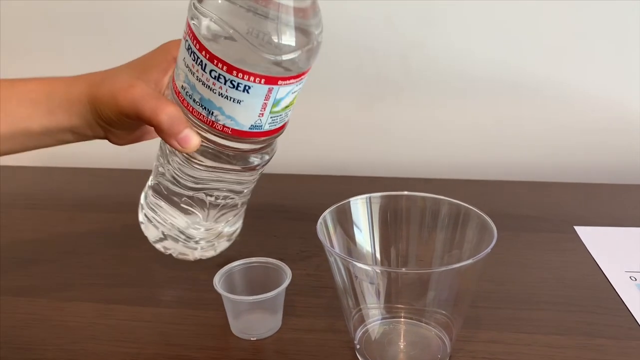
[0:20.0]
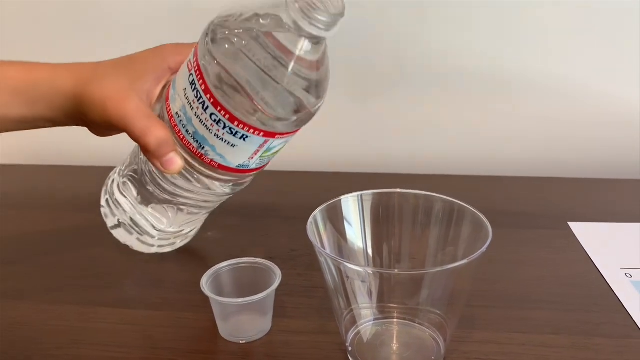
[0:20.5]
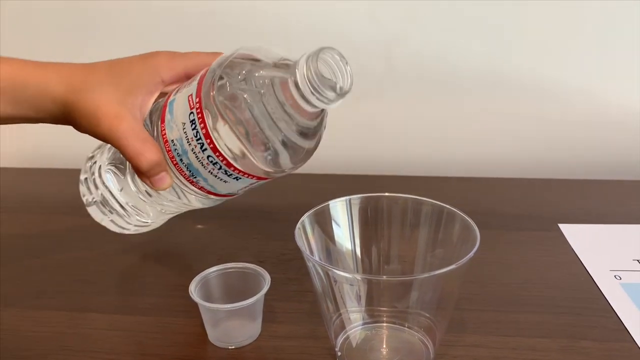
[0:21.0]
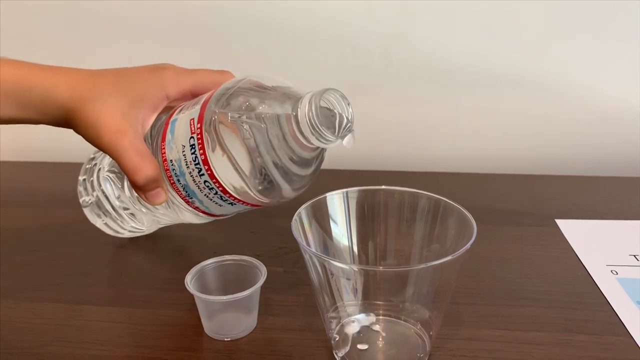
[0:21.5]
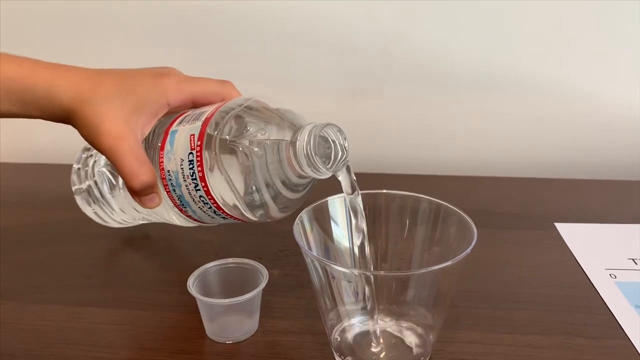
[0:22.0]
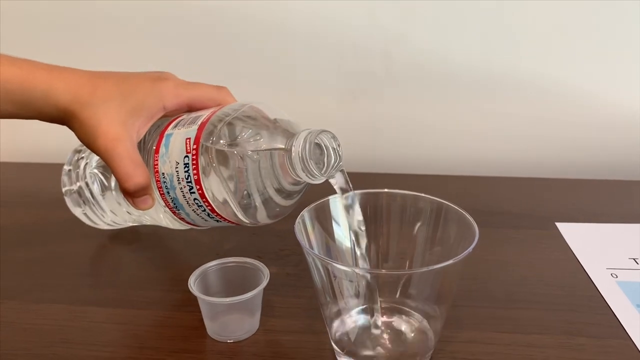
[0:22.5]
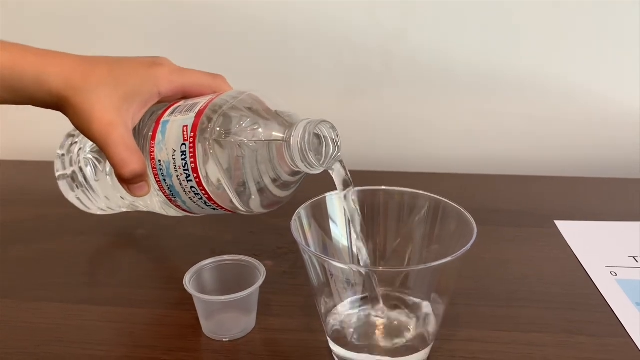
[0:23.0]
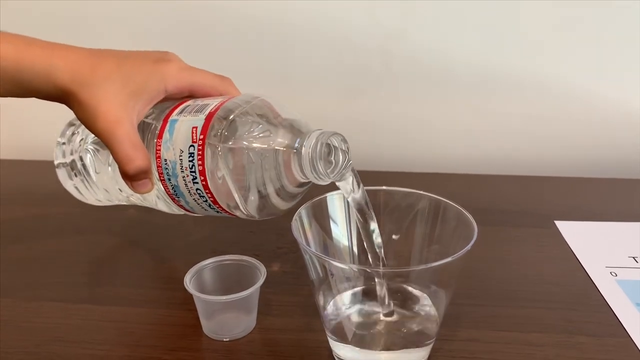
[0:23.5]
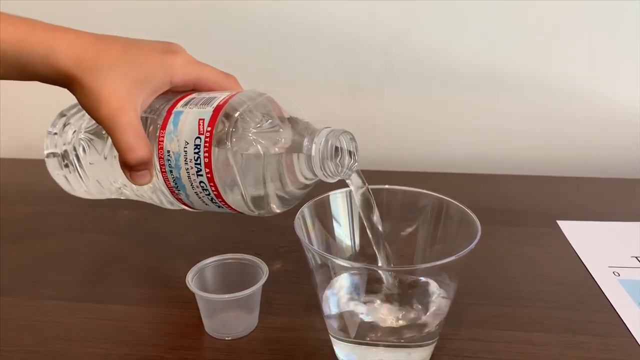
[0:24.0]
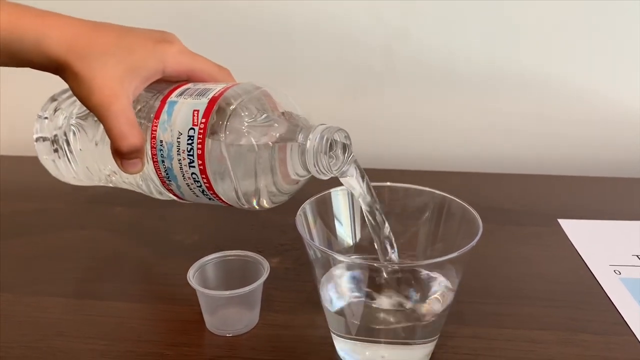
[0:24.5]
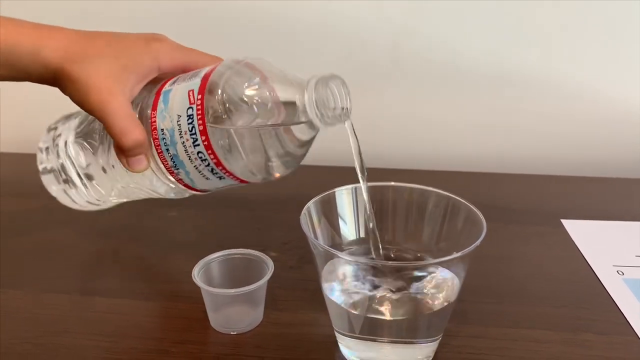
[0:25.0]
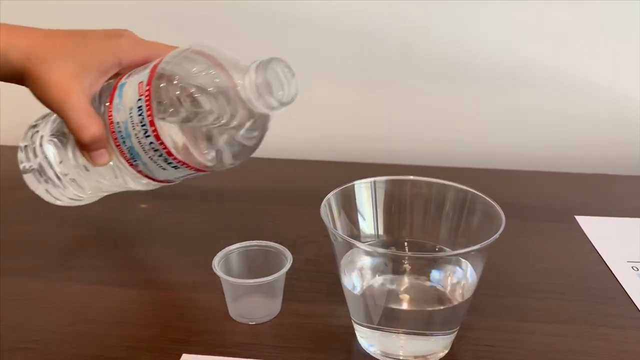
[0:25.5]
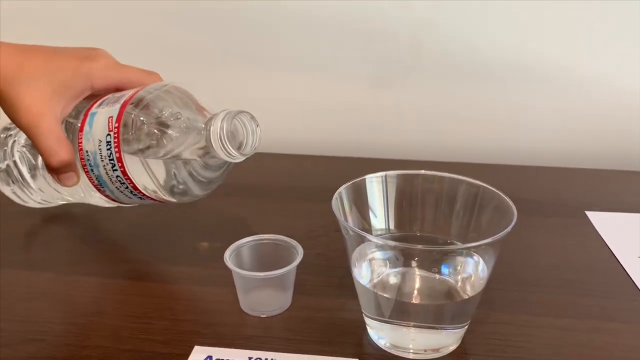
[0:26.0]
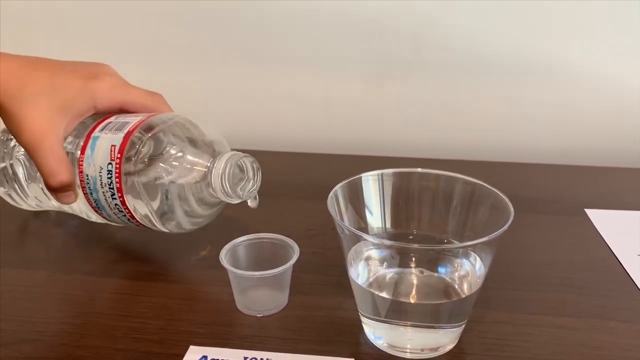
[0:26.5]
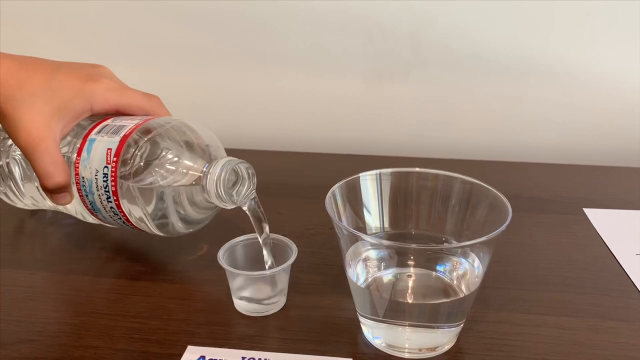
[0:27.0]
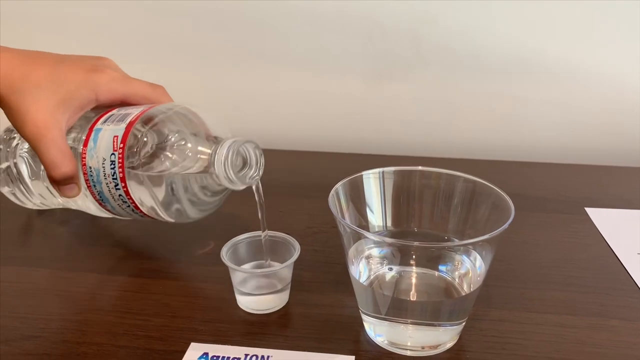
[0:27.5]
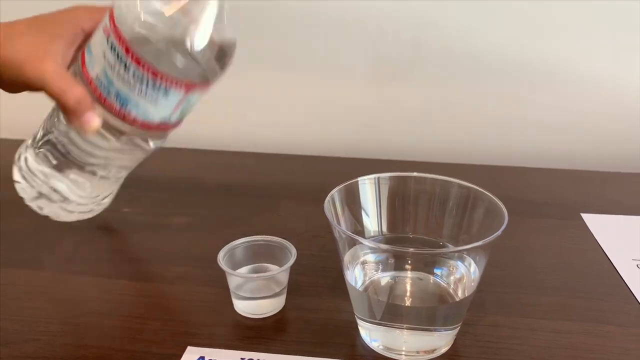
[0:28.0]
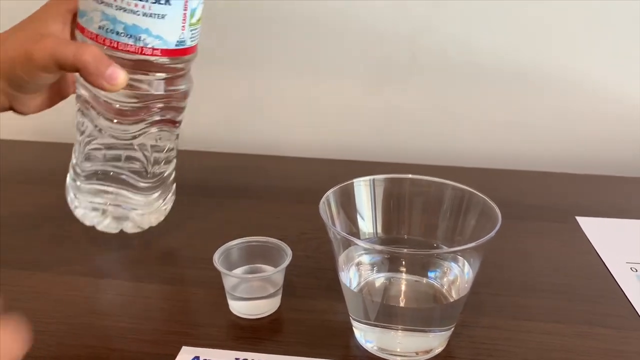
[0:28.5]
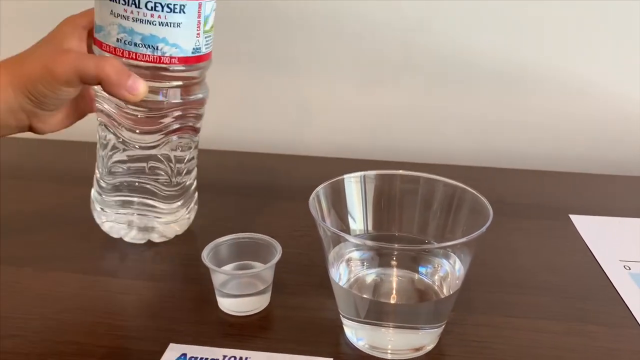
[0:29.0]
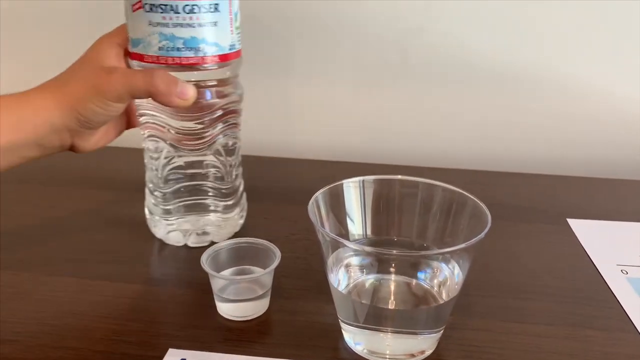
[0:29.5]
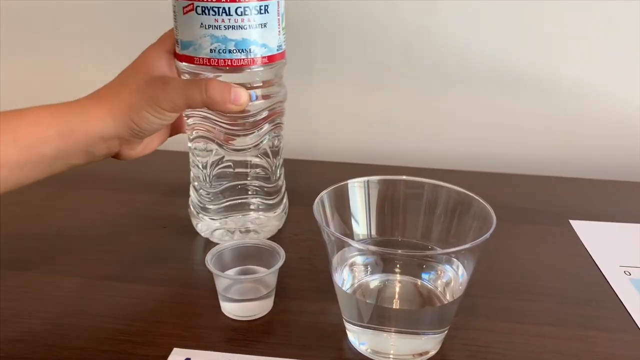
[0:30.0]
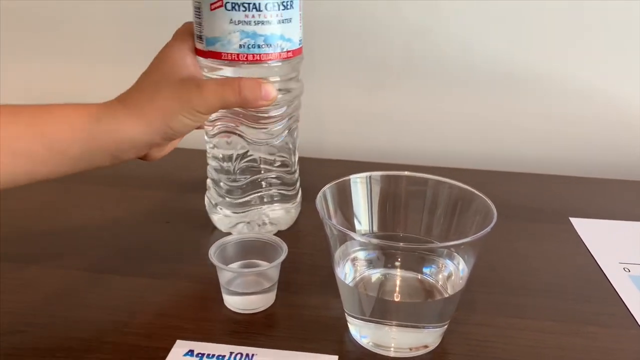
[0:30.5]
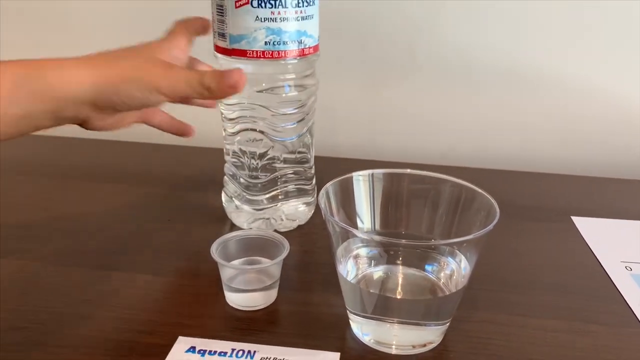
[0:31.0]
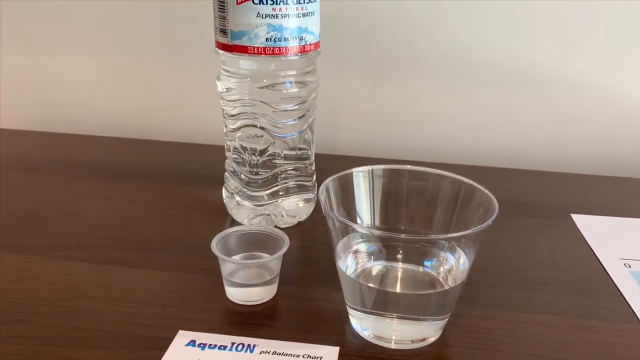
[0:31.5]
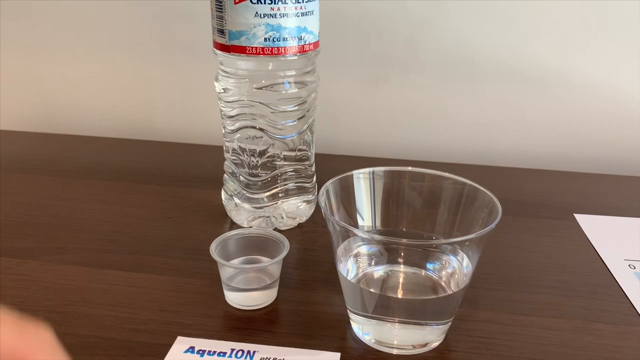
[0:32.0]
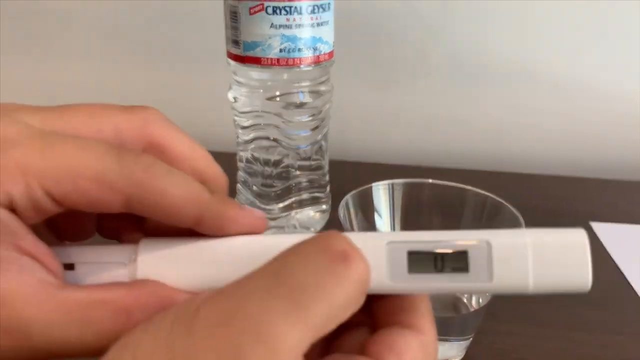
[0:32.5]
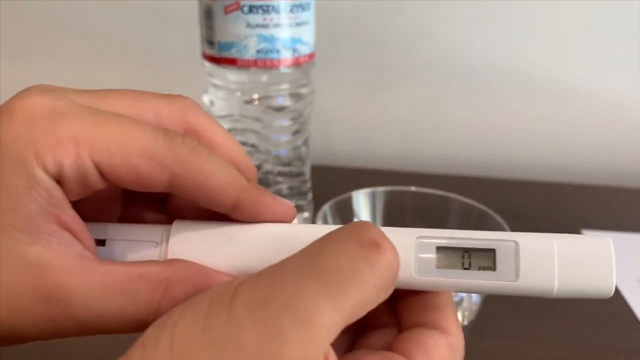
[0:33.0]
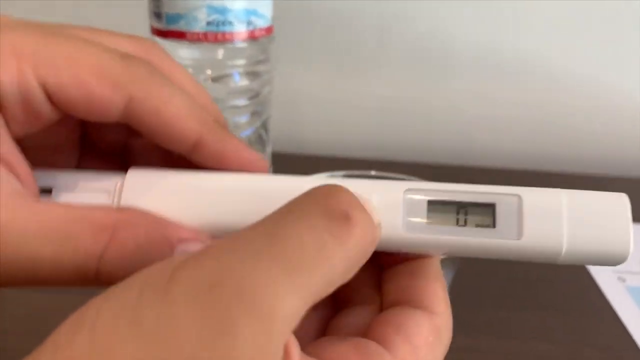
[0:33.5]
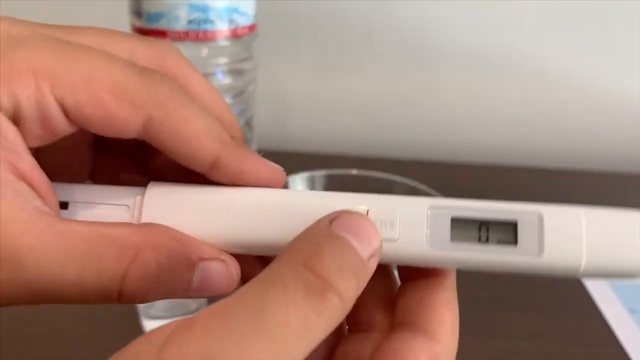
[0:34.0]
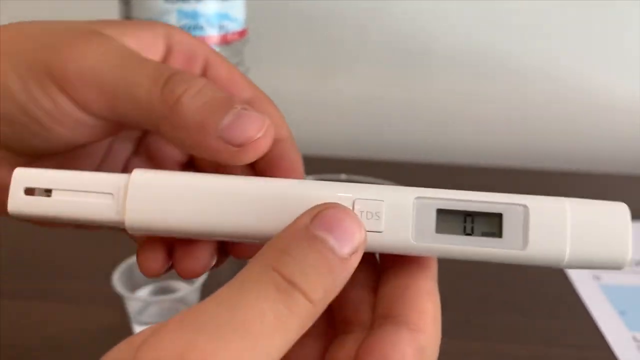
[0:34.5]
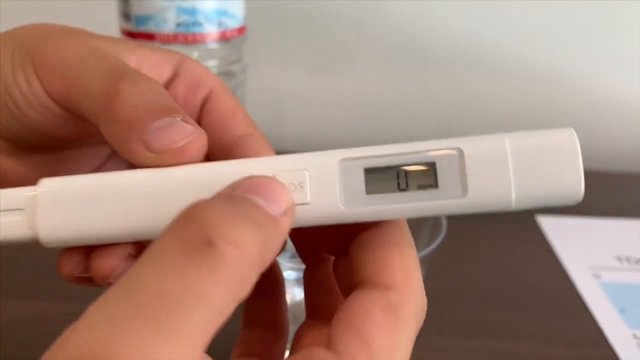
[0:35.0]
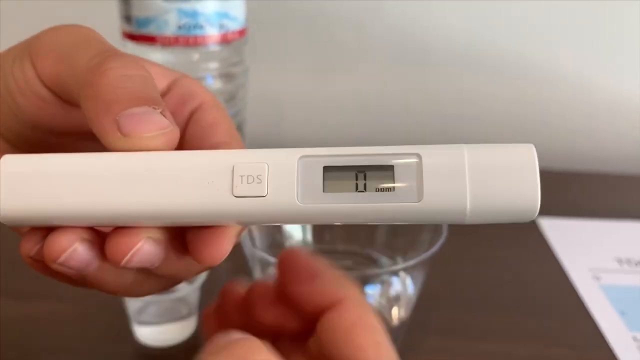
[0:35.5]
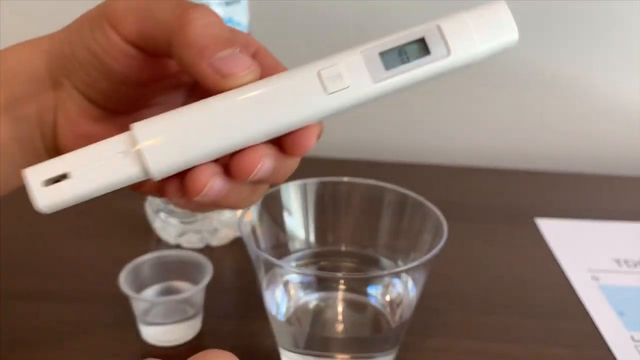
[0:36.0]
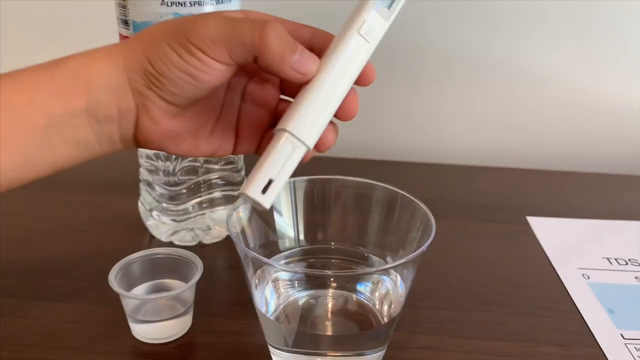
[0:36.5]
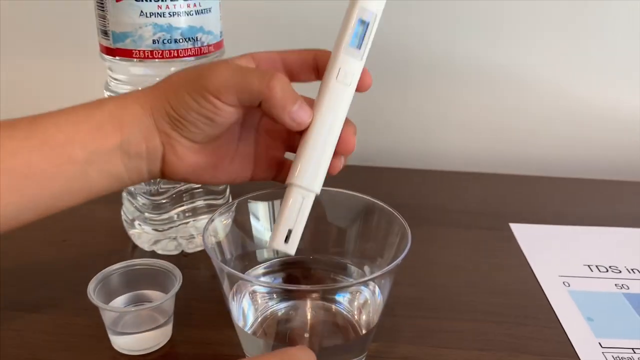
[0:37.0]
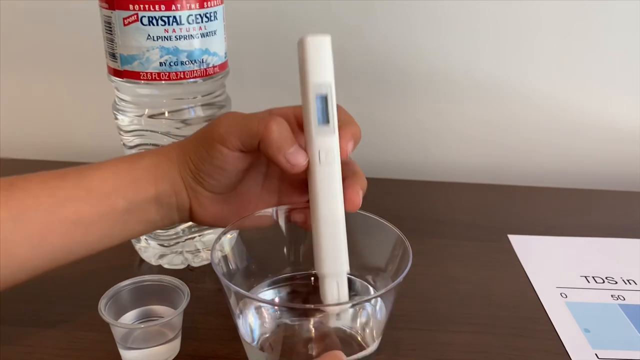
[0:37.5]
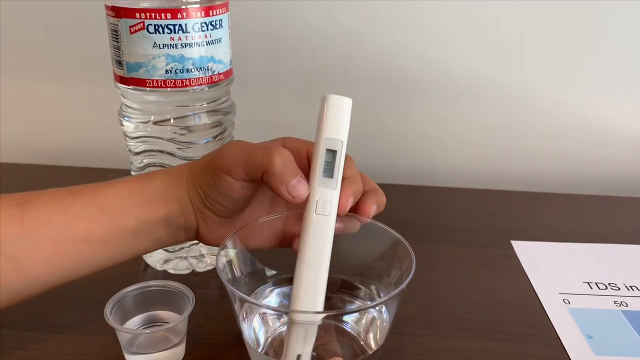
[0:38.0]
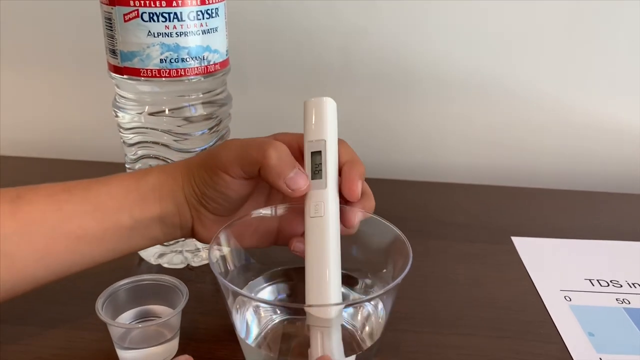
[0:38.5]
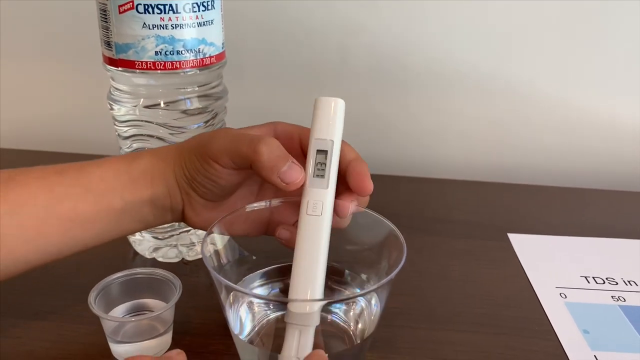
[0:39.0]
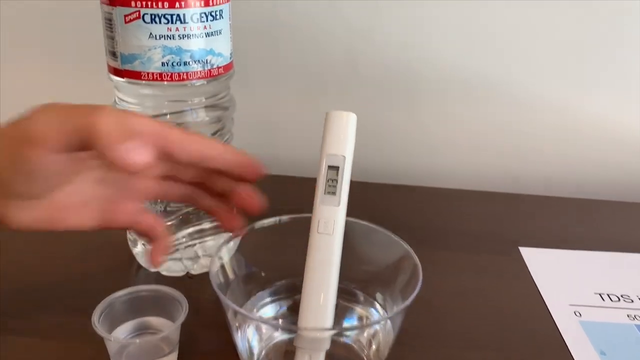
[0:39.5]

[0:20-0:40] The person starts pouring the water into a cup. There are two cups on the table: the one on the right is small, probably about six ounces, a clear hard plastic cup like a Solo cup, and to its left is a small cup like a medicine dosing cup. The person pours water into the larger plastic cup, then pours a little water into the medicine cup. They put the water bottle on the table and appear to put the cap back on. They then pick up an unclear object, some sort of measuring stick that kind of looks like a thermometer, with "TDS" on it, and put it into the water in the larger plastic cup on the right. The measurement reads "0" at first, then "113" once it is in the cup.